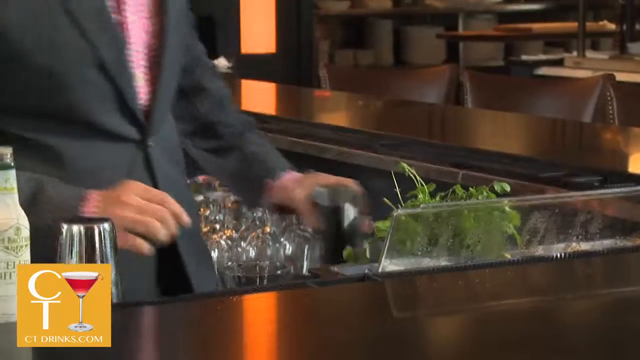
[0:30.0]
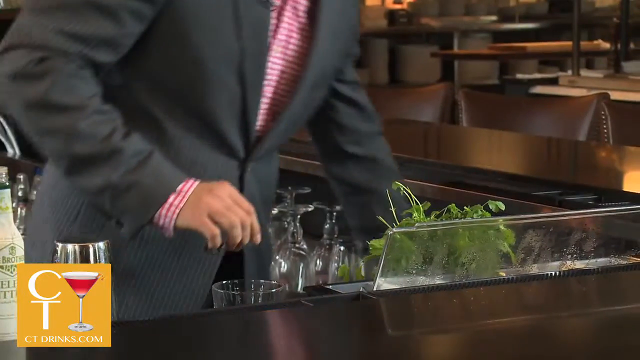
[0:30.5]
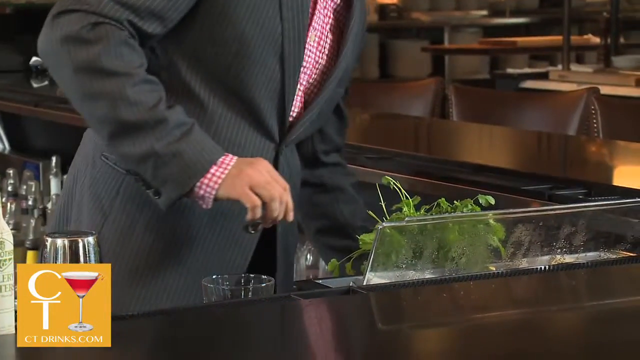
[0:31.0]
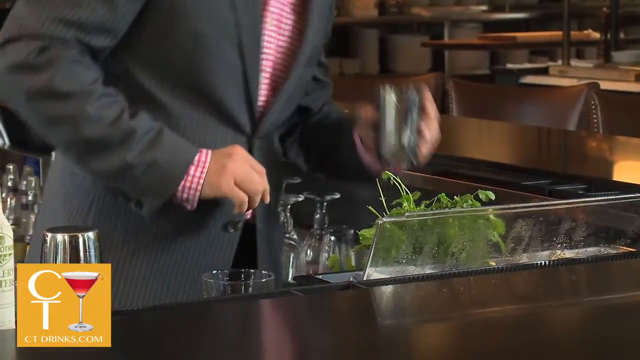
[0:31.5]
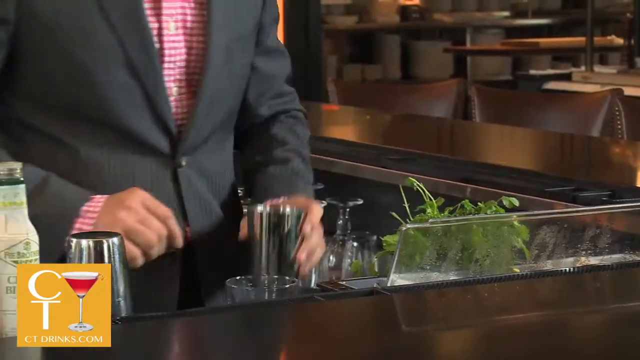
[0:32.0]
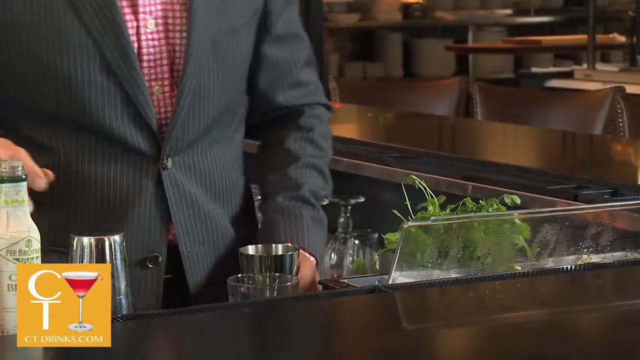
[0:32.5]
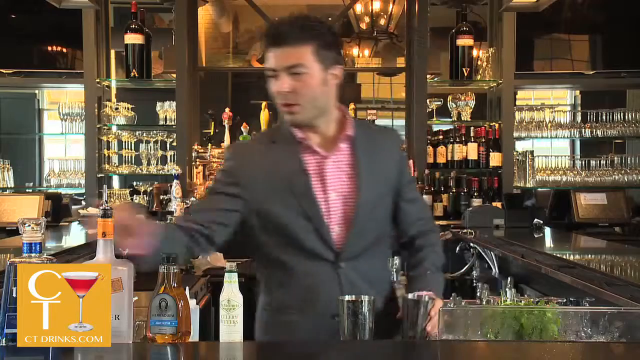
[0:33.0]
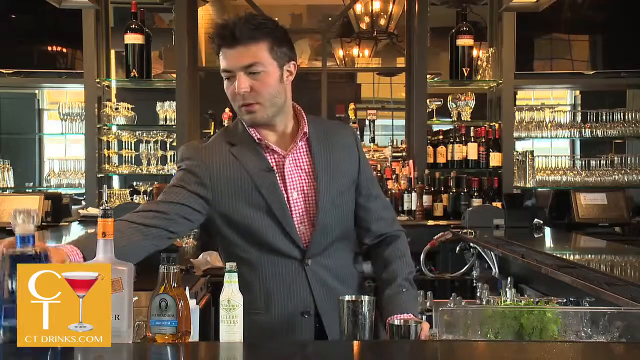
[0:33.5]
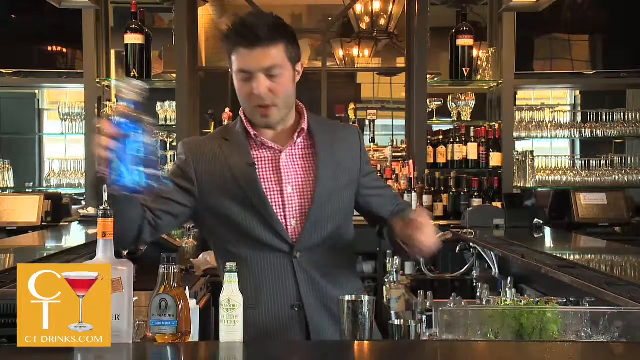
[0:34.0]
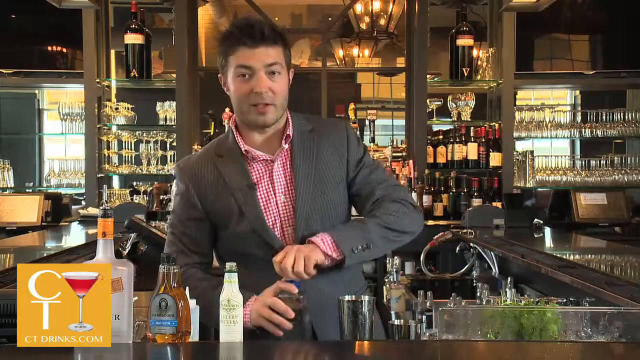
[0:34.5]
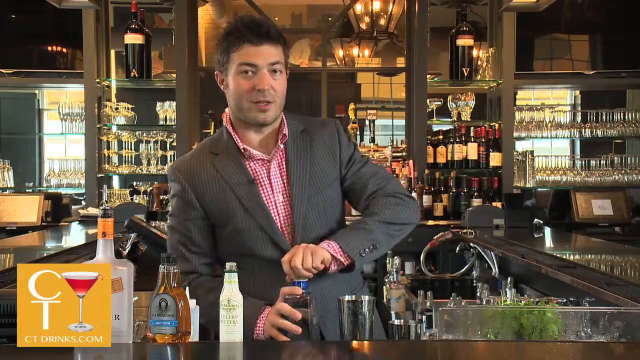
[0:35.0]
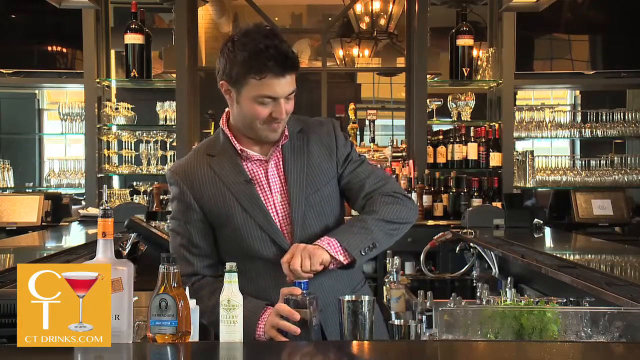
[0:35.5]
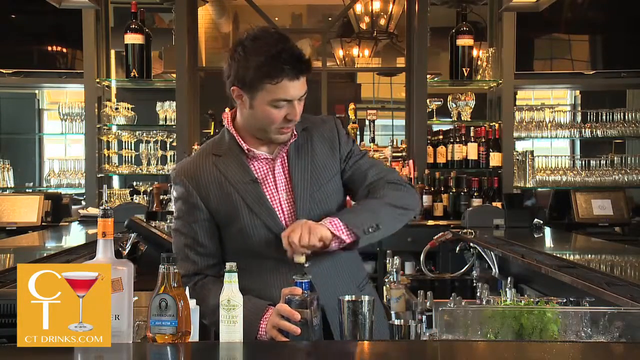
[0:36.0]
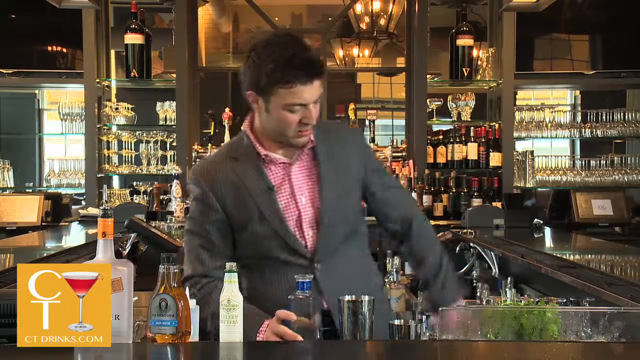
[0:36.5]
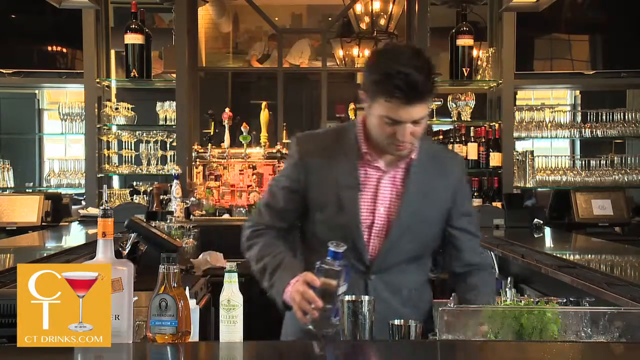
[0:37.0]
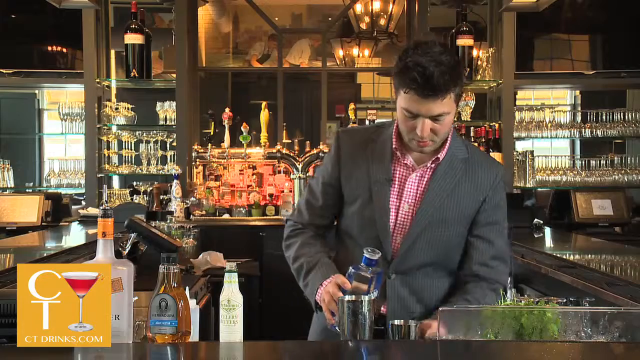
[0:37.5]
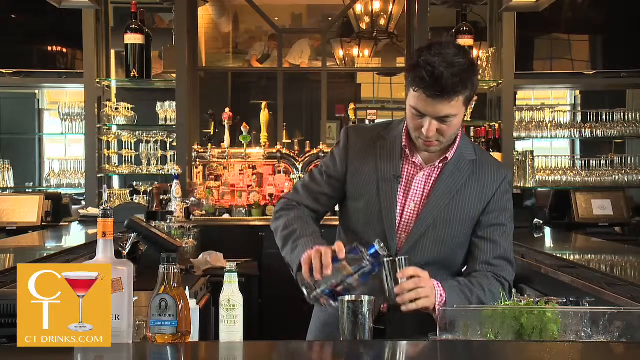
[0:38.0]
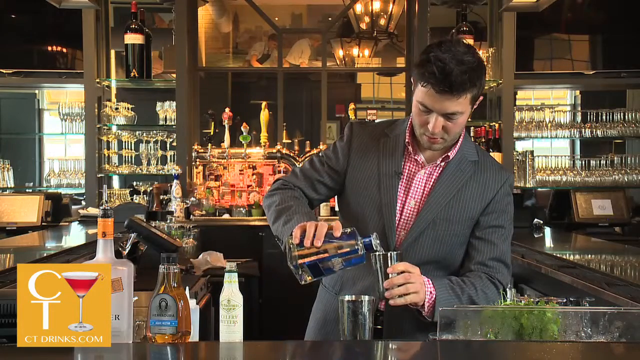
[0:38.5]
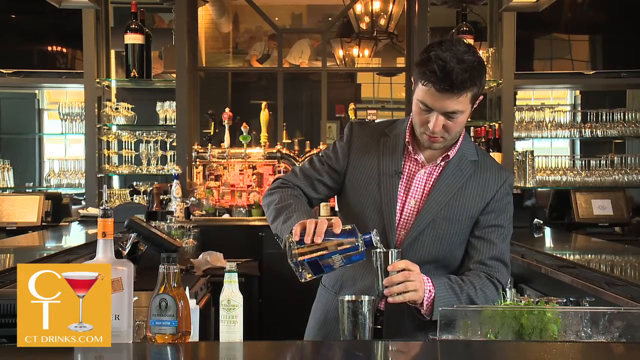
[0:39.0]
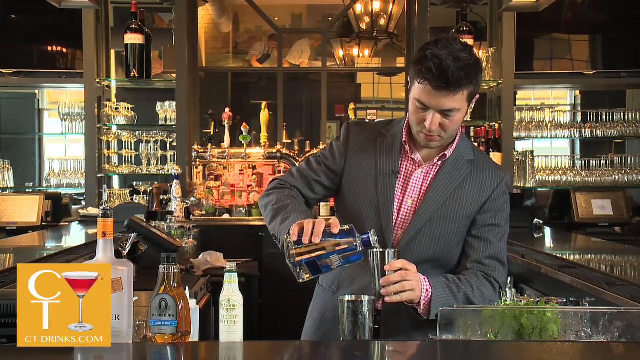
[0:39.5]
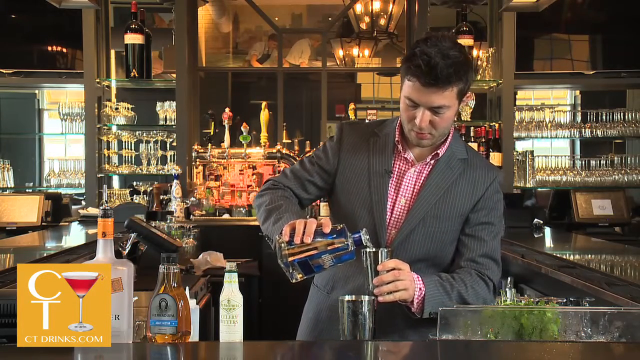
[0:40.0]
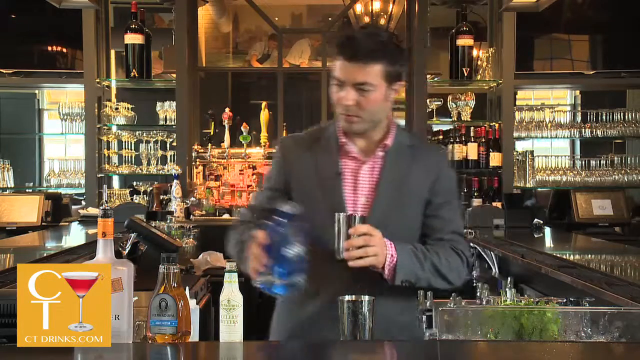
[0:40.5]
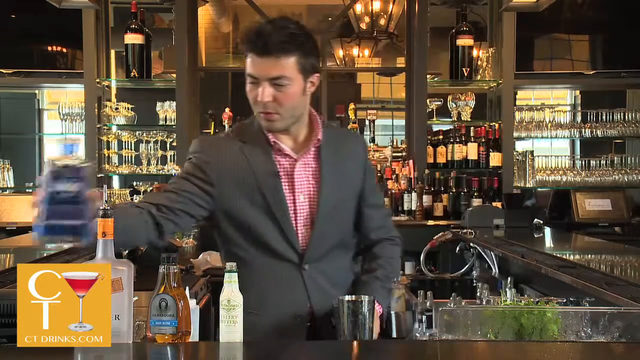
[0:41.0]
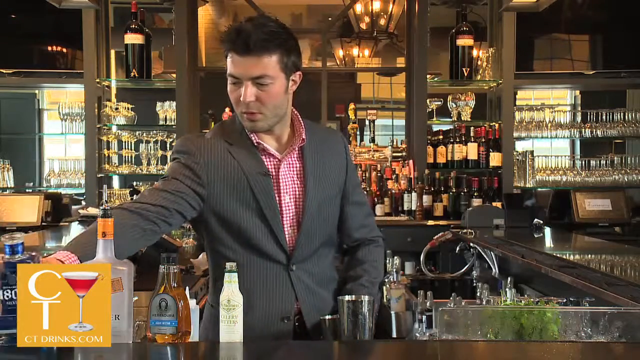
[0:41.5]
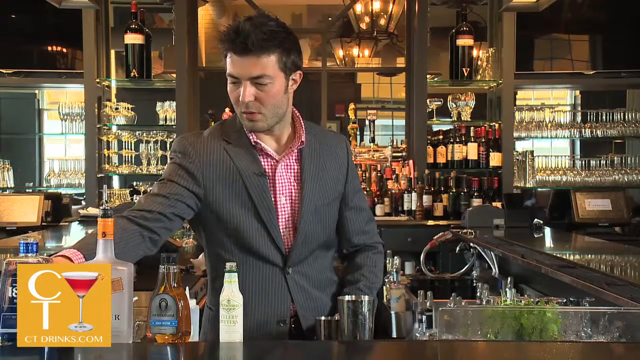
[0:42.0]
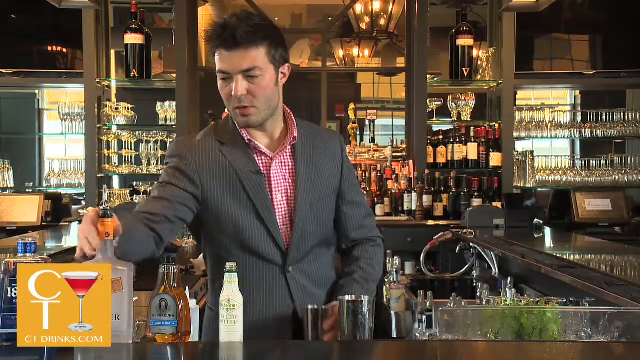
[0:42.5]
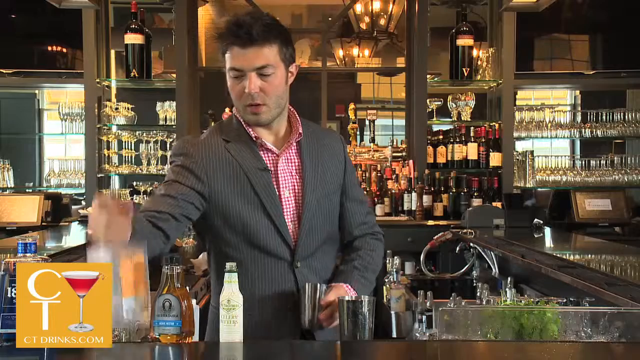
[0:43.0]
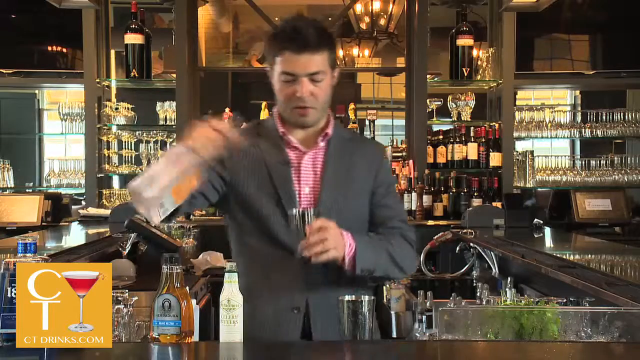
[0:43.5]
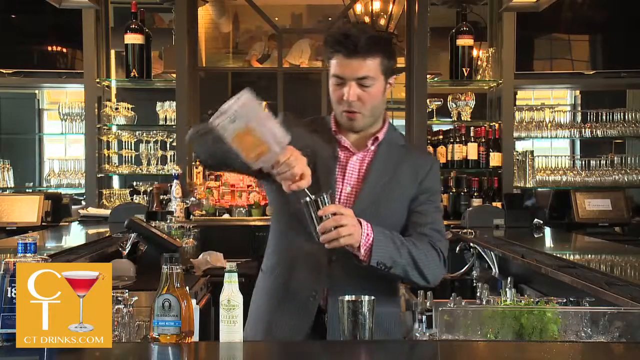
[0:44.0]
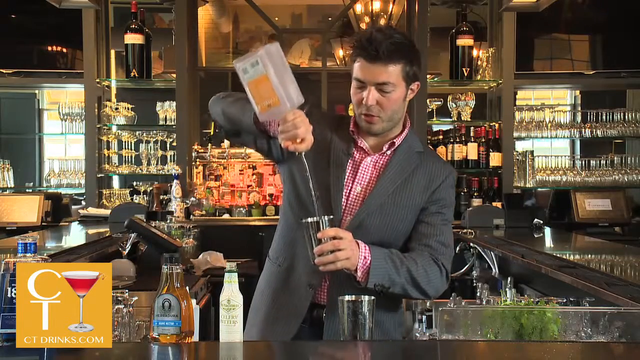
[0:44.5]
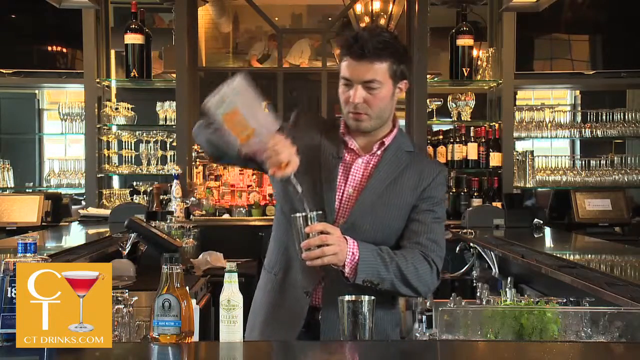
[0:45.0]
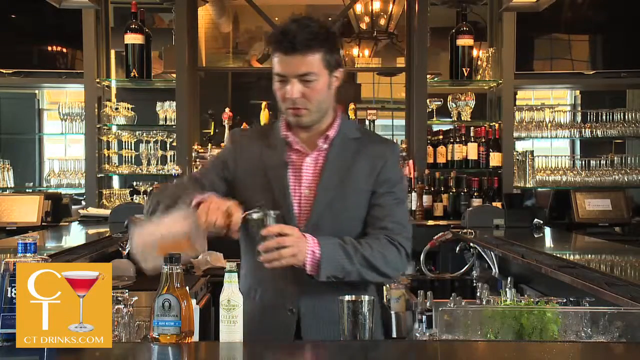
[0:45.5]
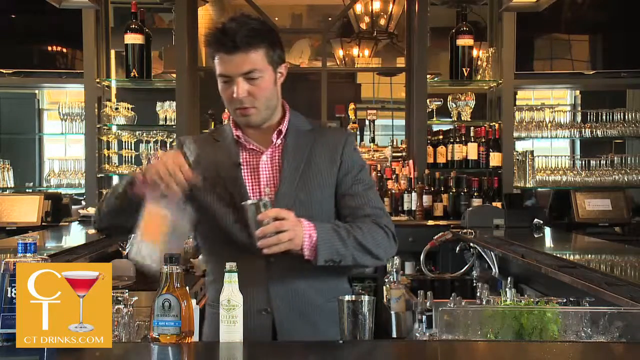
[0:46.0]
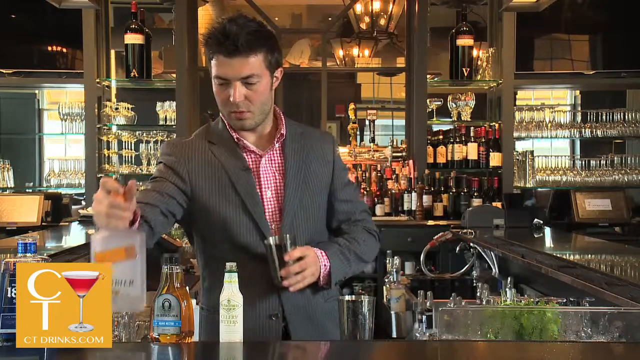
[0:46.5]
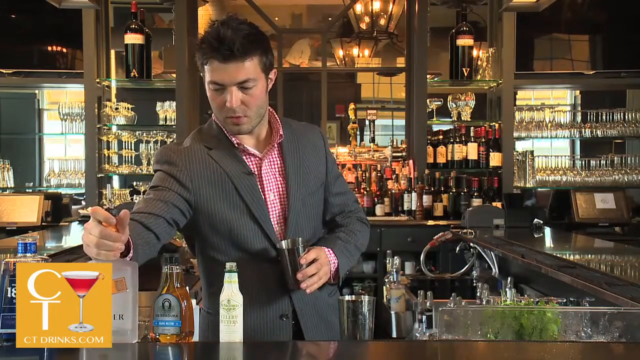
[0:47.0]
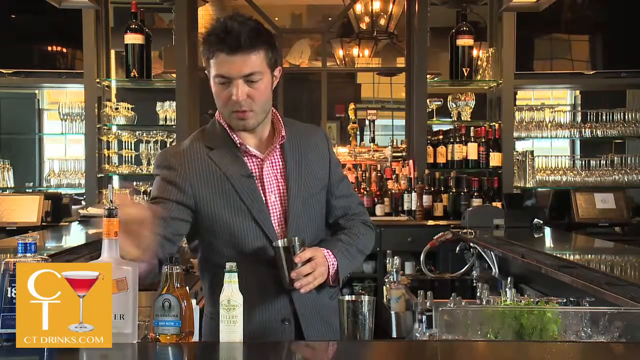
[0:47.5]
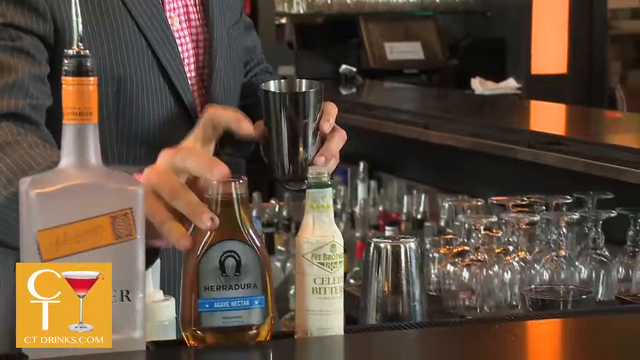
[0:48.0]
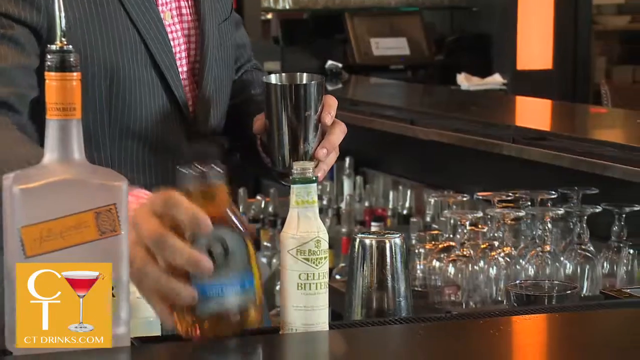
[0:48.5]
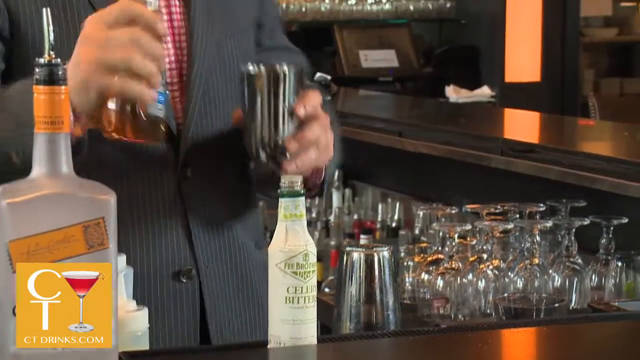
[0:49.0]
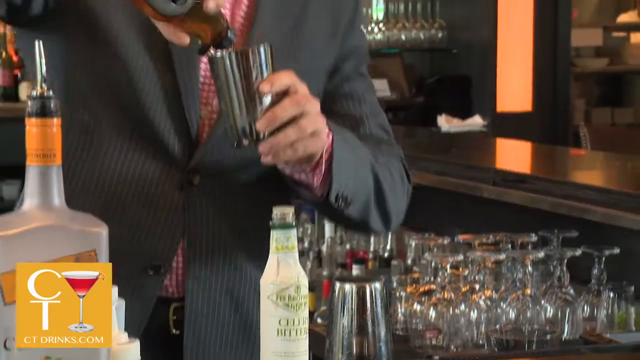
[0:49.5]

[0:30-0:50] A man continues making a drink behind a fairly ornate bar. Directly in front of him are sprigs of cilantro, and he is holding a metal shaker cup. He reaches over, grabs a bottle of alcohol and pours a fairly clear liquid into the shaker cup. He then picks up another bottle and pours that into the cup, then picks up a bottle of what looks like agave nectar and squeezes some into the cup as well. He wears a gray pinstripe jacket over a red and white checked shirt and has very short dark hair. The bar behind him is very ornate, with mirrors and glass shelves on either side filled with drink glasses, plus some additional bottles of liquor on the shelves behind him. A large light fixture hangs directly over him and looks like it is reflected in the mirror behind him as well. Windows directly across from him in the bar are reflected in the mirrors. When the camera focuses on the counter in front of him, what looks like a kitchen is briefly visible on the right side of the screen.